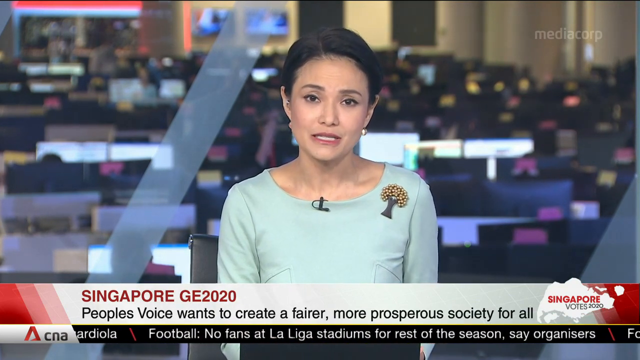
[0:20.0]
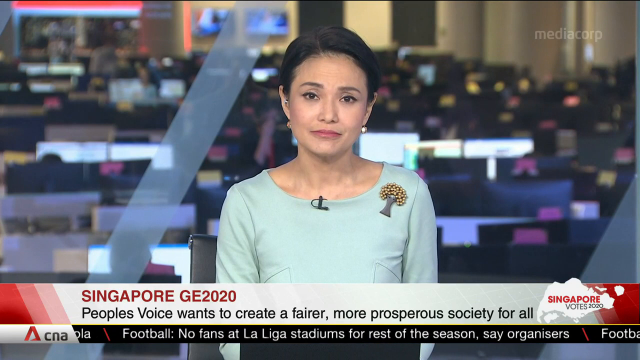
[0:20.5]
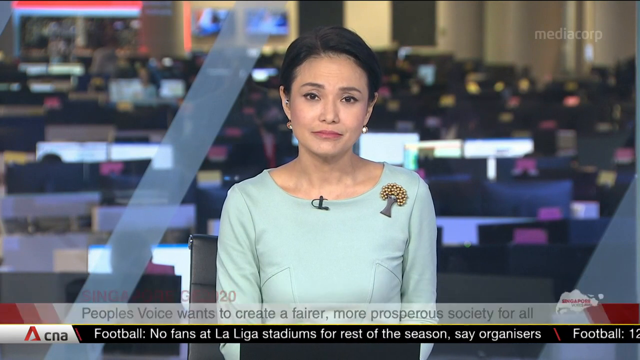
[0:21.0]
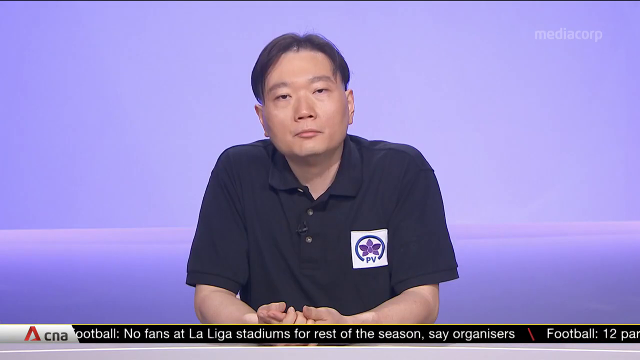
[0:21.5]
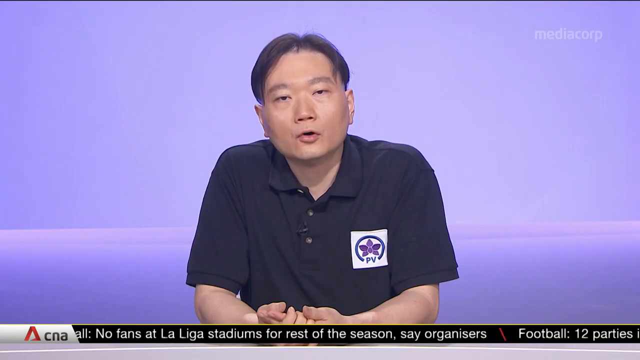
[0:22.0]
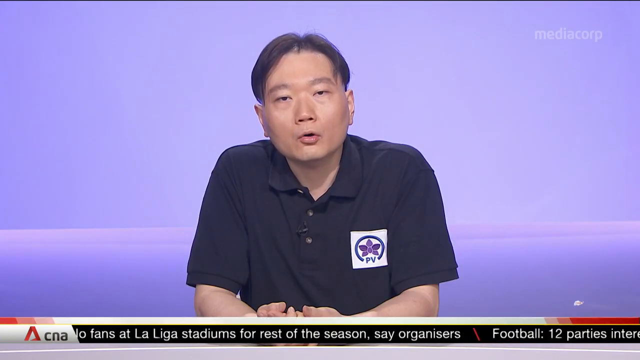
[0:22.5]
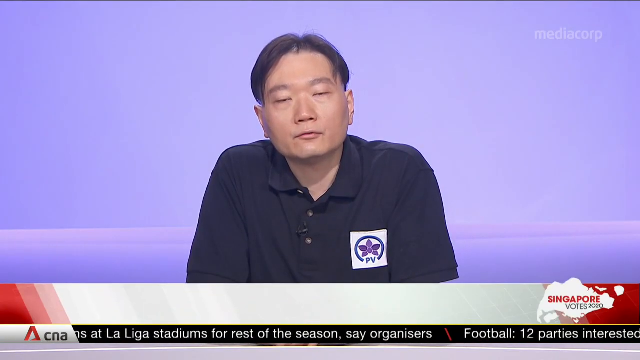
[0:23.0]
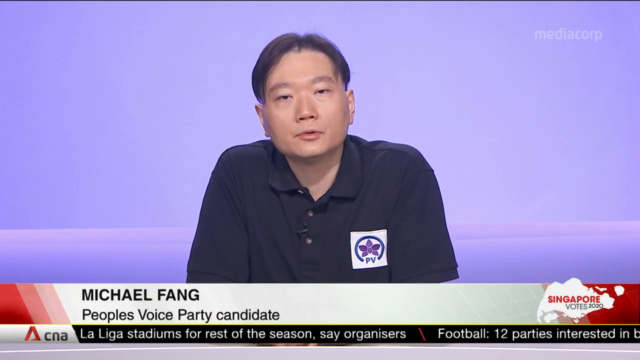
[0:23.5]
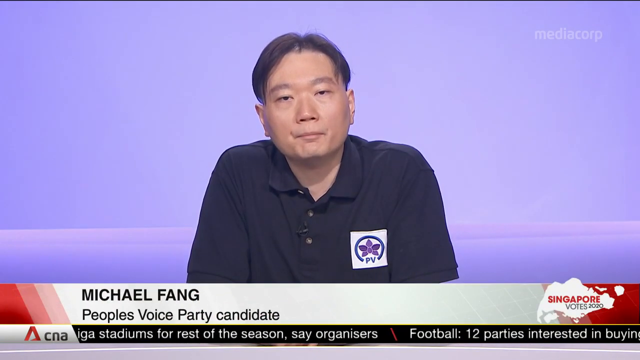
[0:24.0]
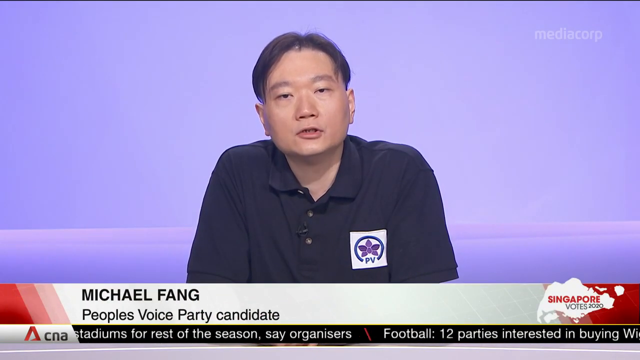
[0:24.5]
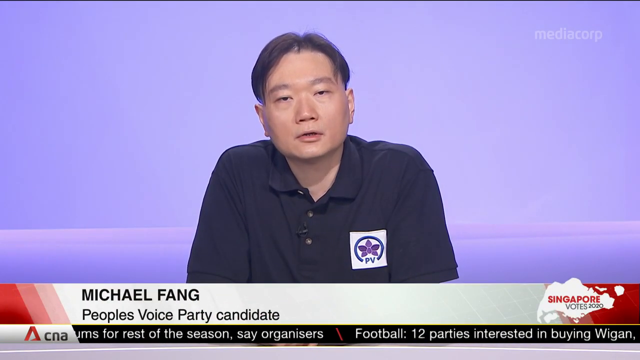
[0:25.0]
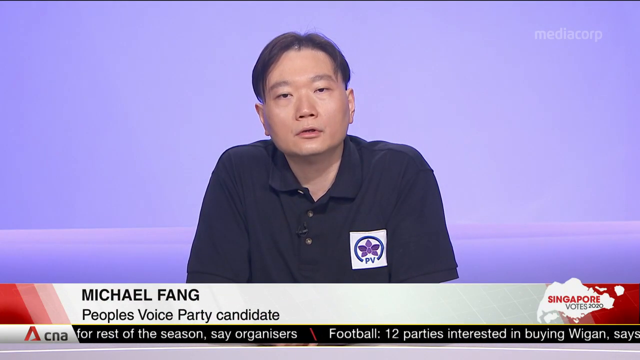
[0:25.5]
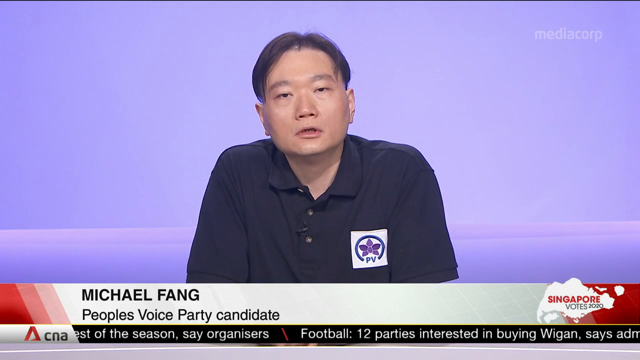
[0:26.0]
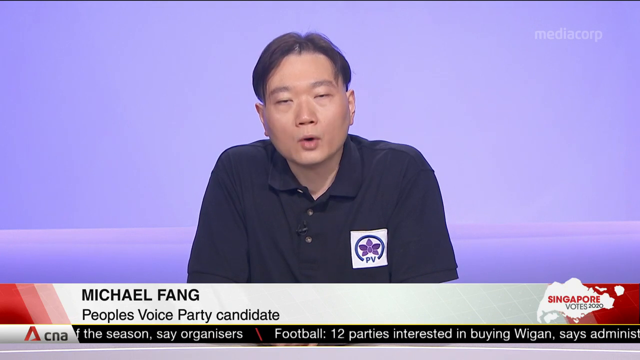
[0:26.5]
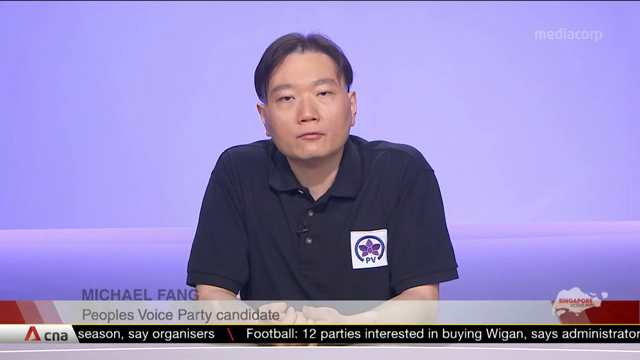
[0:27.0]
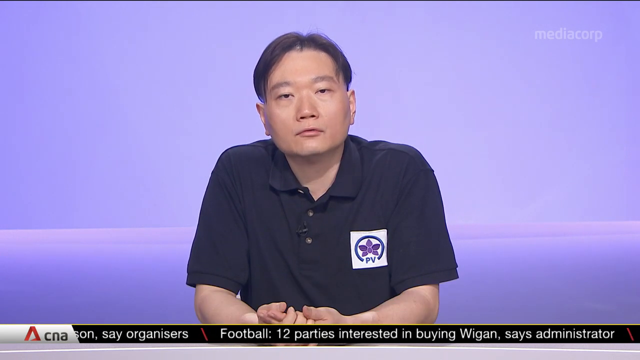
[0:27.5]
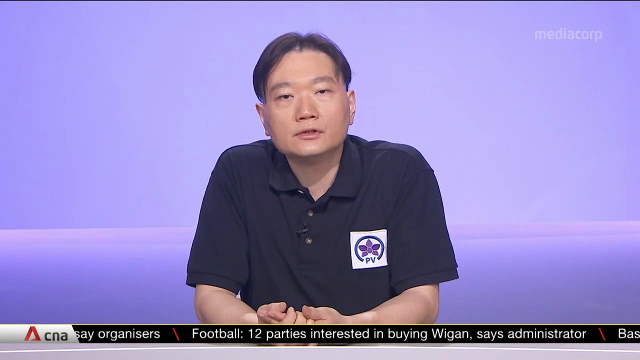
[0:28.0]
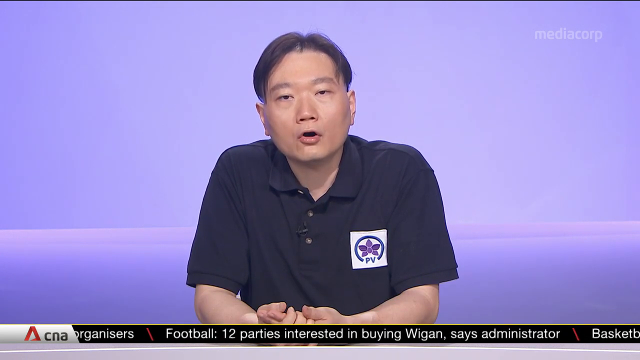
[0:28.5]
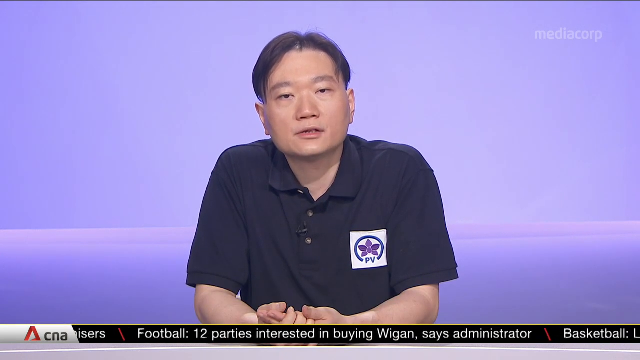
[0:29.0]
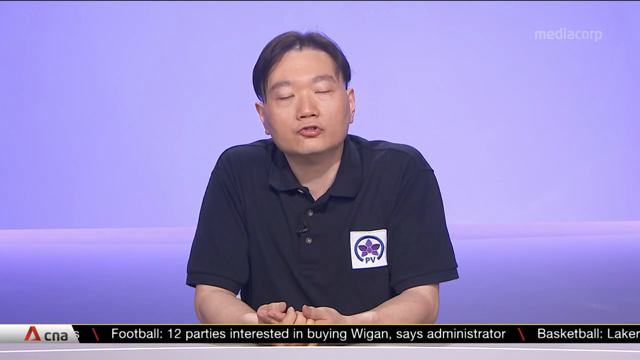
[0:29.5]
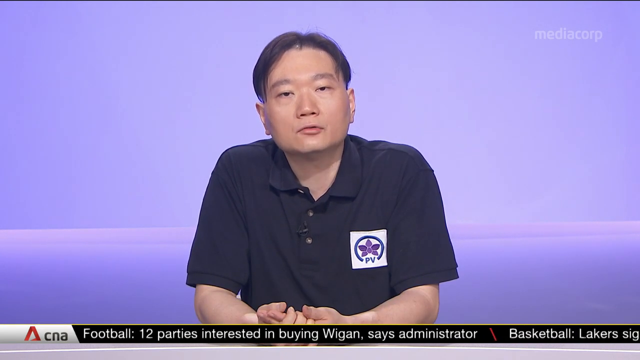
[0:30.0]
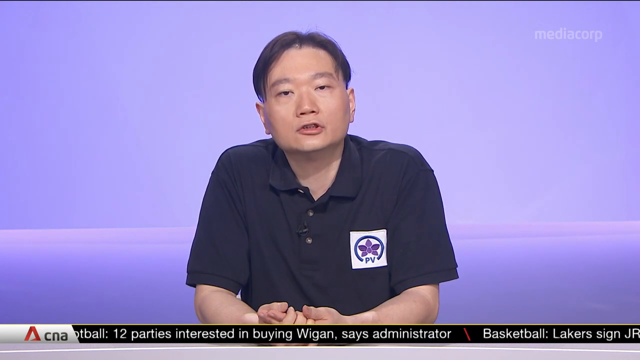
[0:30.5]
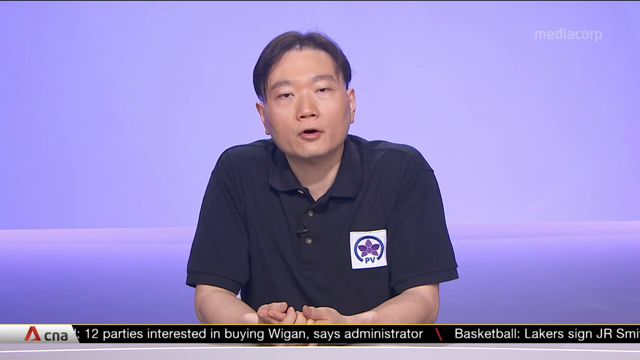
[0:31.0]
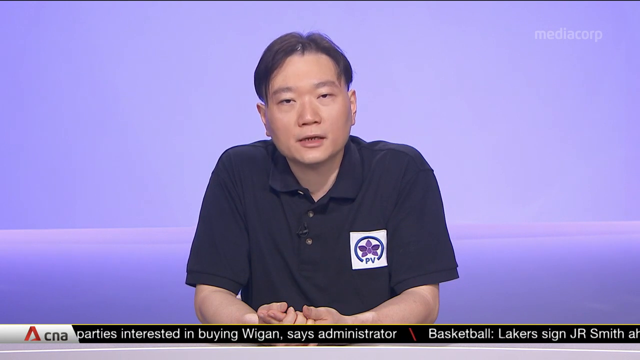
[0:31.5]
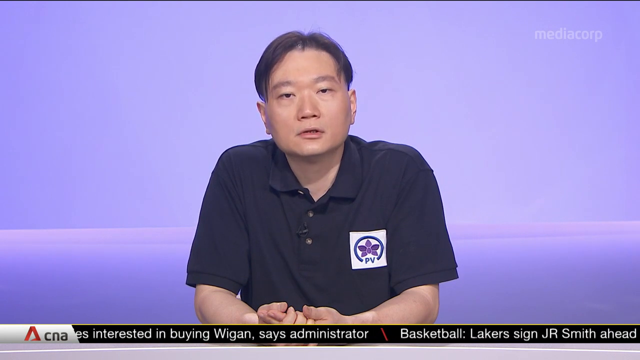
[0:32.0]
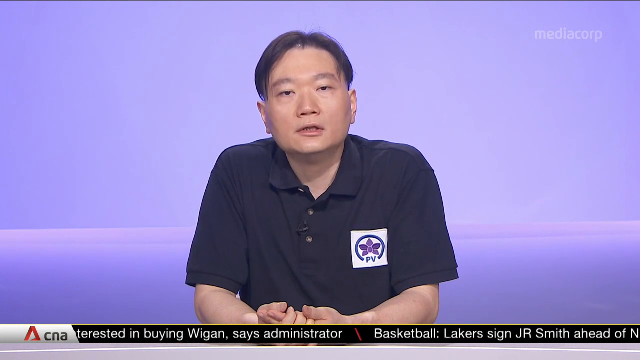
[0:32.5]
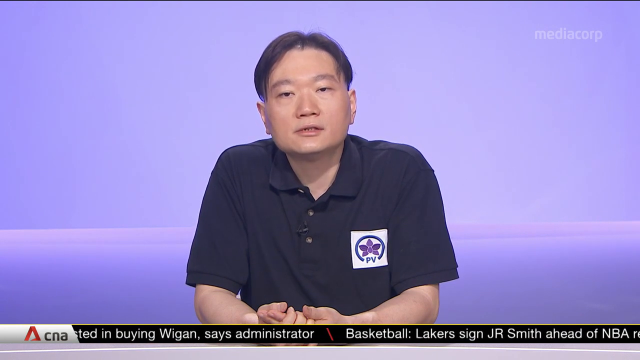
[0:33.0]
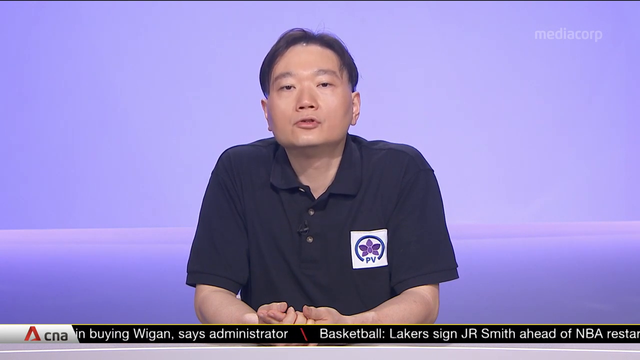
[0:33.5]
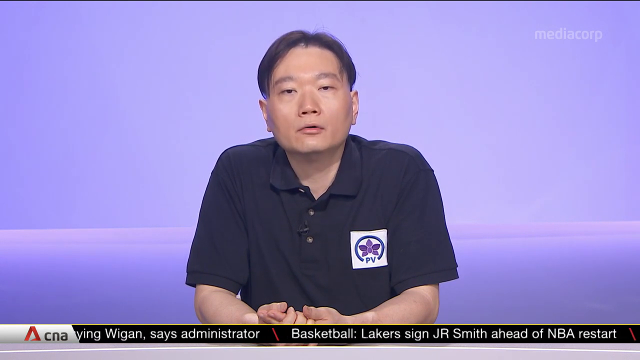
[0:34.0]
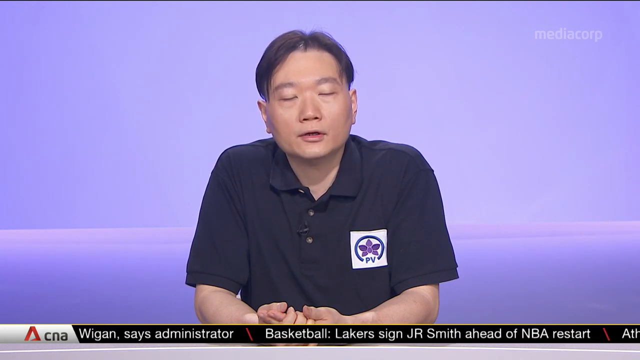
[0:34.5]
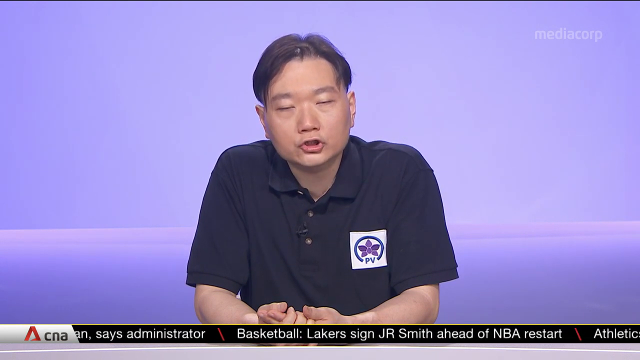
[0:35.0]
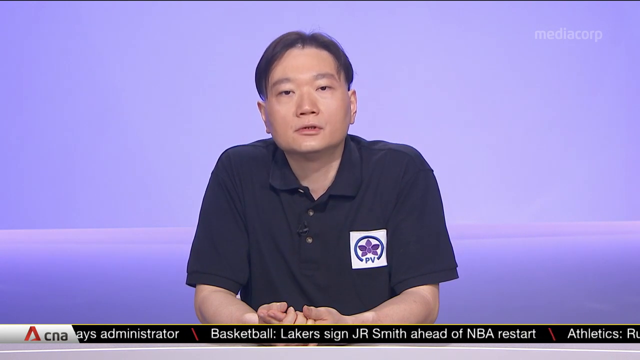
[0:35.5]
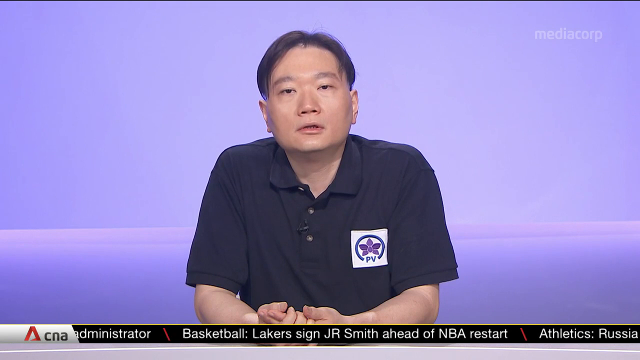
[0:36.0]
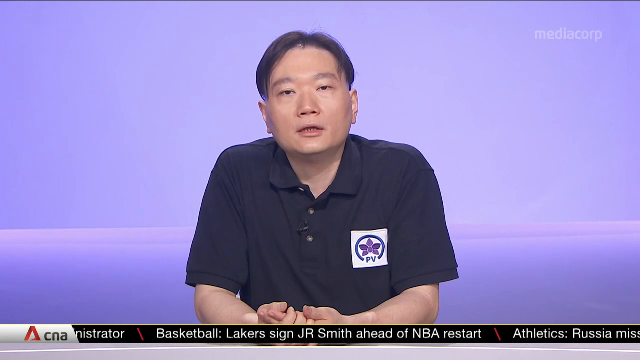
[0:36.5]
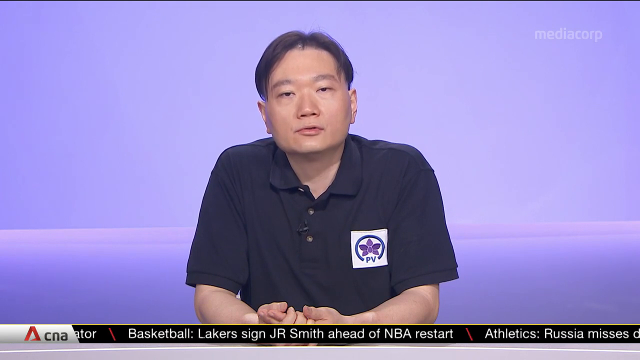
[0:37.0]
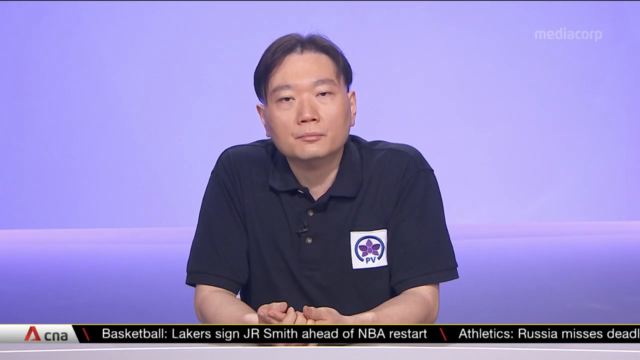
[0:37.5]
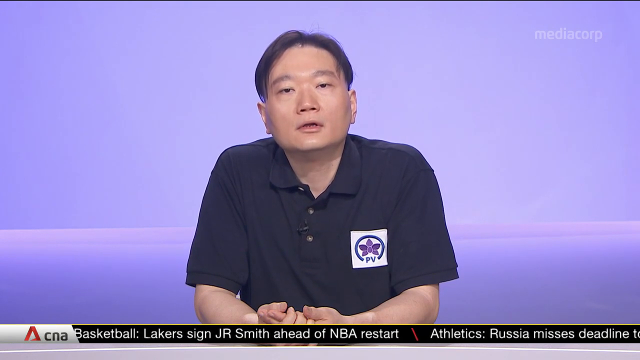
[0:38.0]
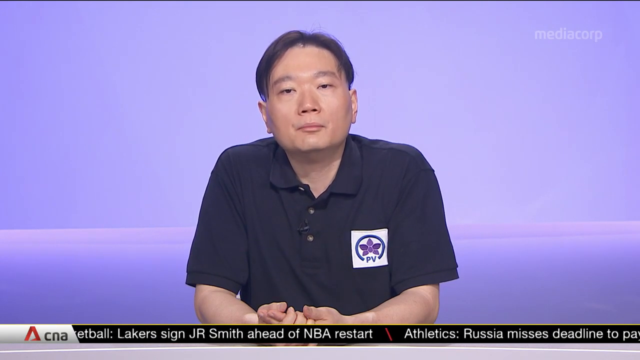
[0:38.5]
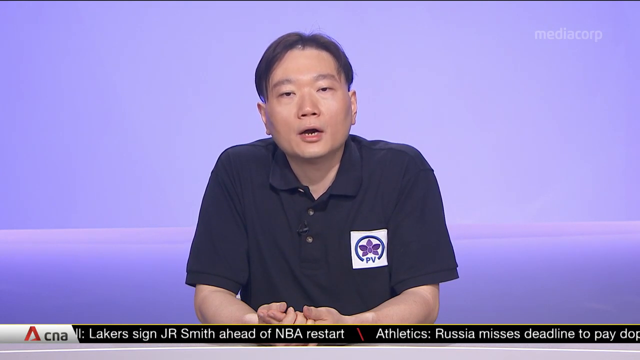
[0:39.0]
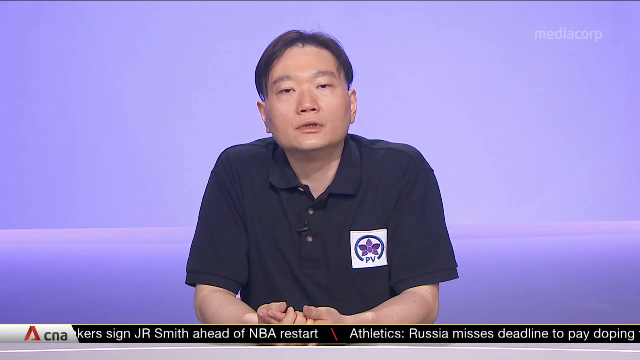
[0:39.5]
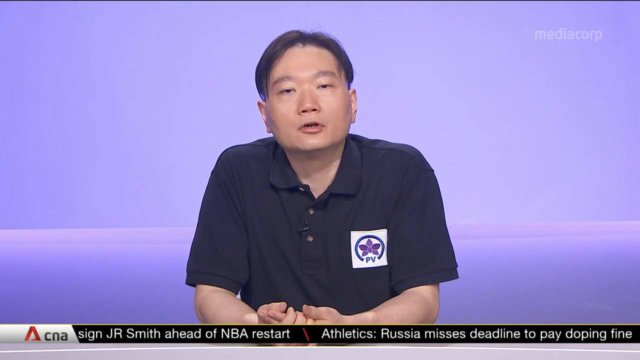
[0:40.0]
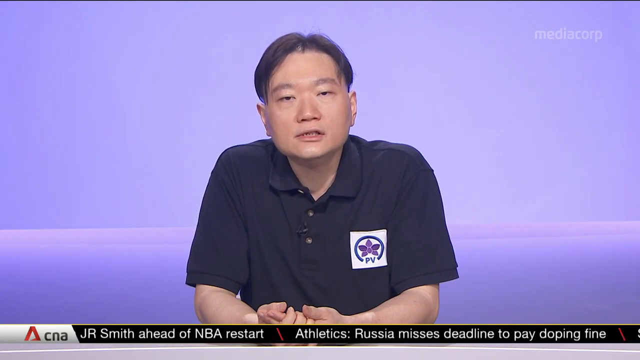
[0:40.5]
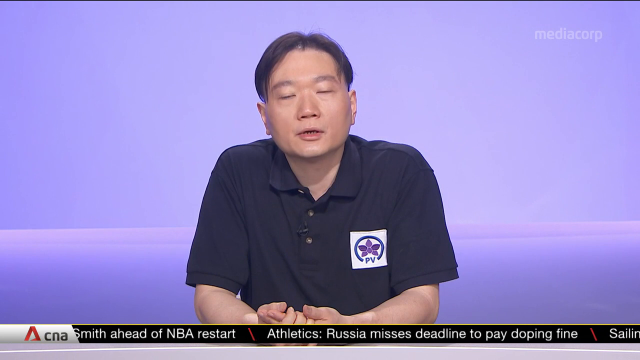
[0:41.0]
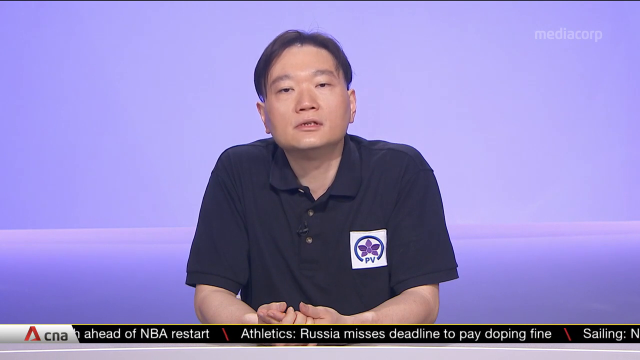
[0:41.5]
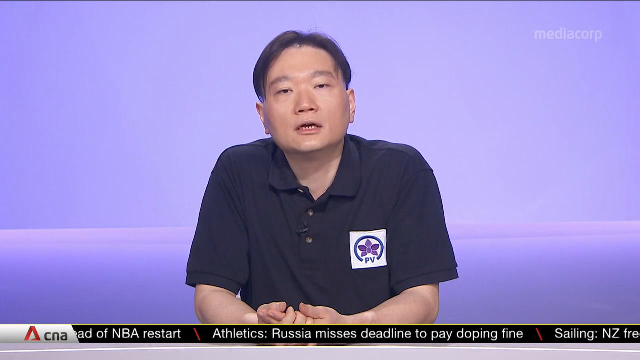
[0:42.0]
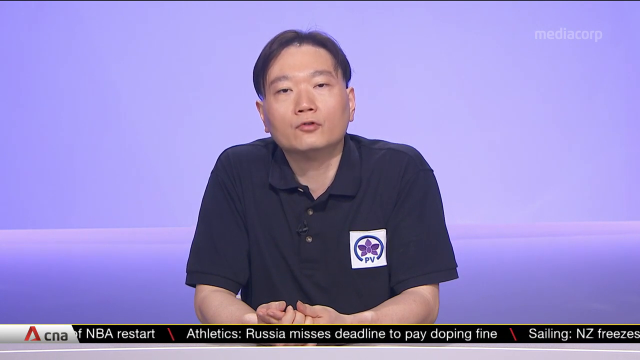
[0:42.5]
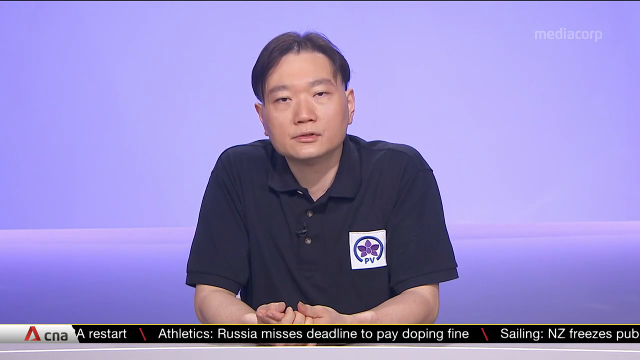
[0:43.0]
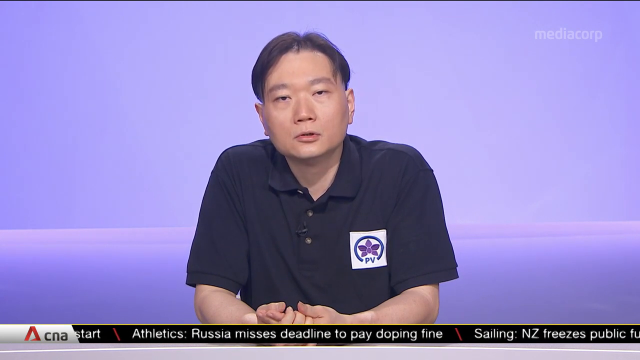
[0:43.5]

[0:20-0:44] The newscaster reports on the story alone, sitting in a black chair as the only one in front of the camera. She has black hair and pink lipstick and wears a mint colored shirt with a pendant clipped onto it, along with a black microphone. In her background someone appears to be standing up and talking amongst the other newscasters, and there are at least 50 computers that the newsroom personnel appear to be using for reporting. The story is about the 2020 election in Singapore, and the topic appears to be the voice of the people and how they would like to create a fairer, more prosperous society. After she starts talking, the scene flips to a gentleman who appears to be a voice for the people of Singapore. He has a tag on his shirt that says "people's voice," suggesting he is a representative for a certain party.